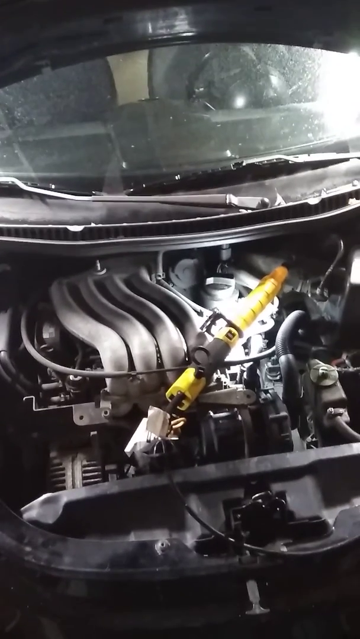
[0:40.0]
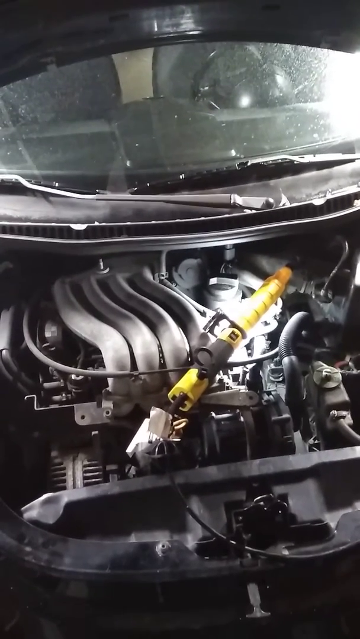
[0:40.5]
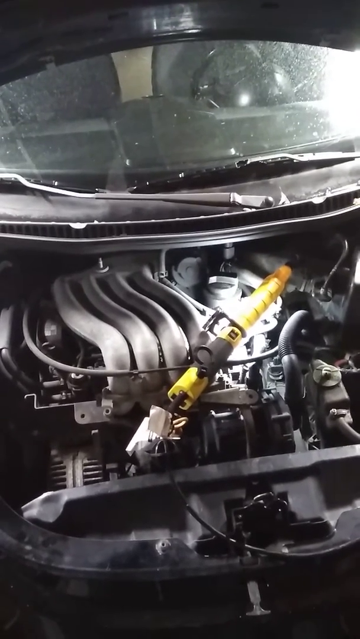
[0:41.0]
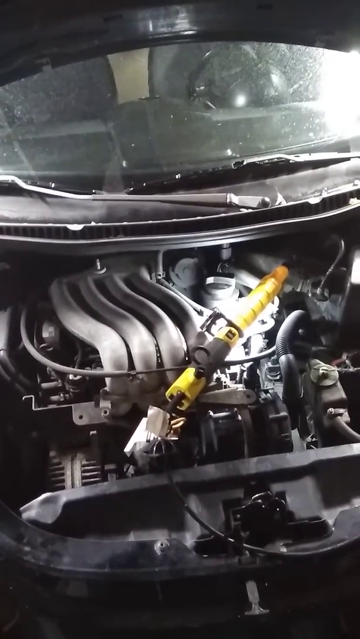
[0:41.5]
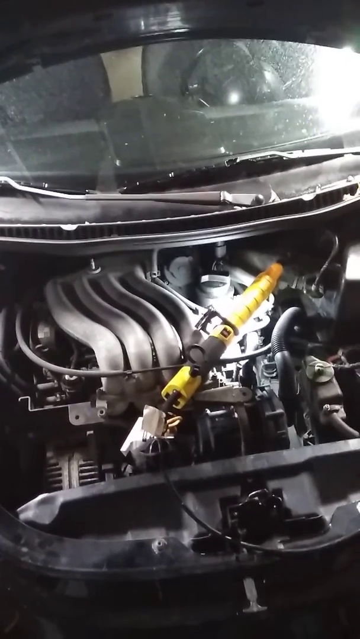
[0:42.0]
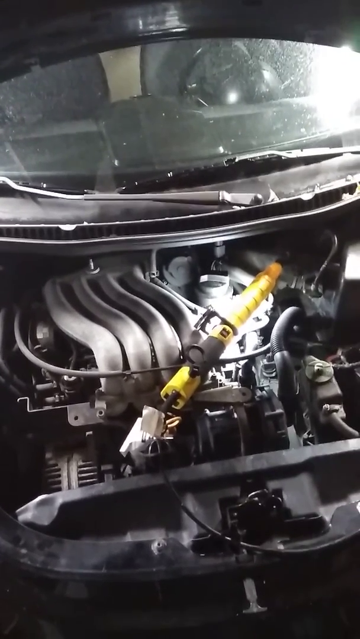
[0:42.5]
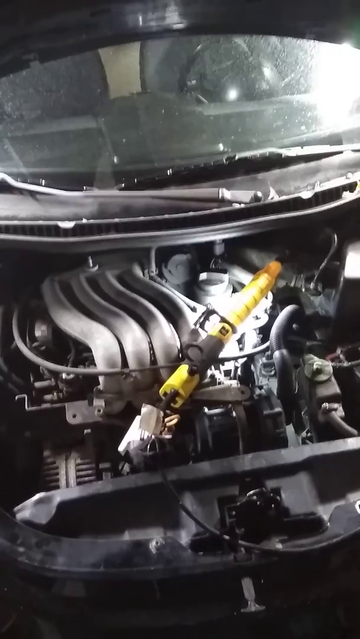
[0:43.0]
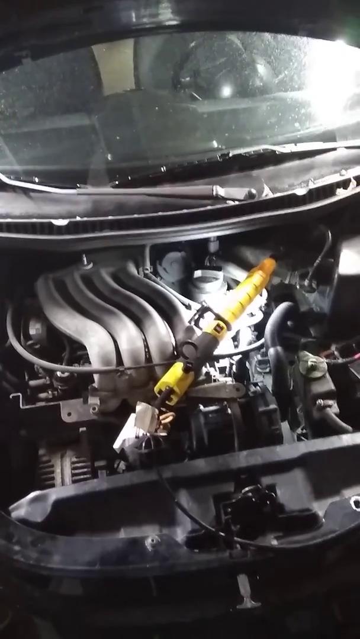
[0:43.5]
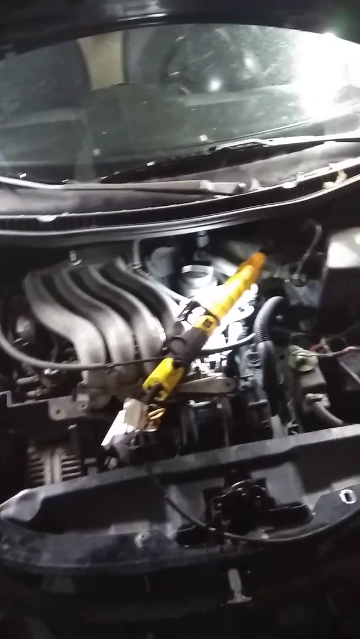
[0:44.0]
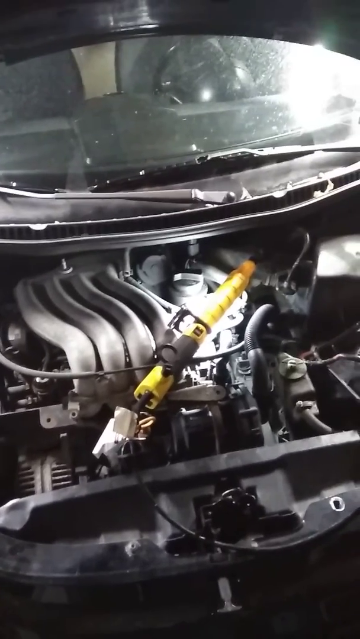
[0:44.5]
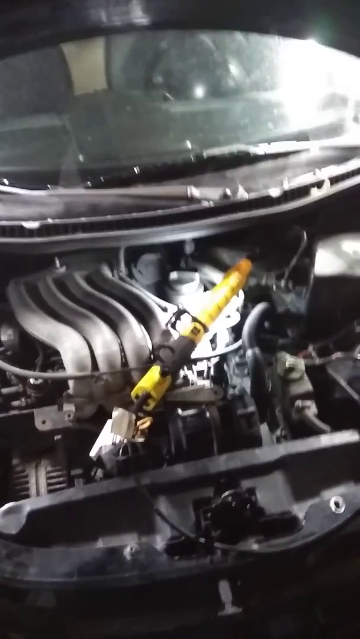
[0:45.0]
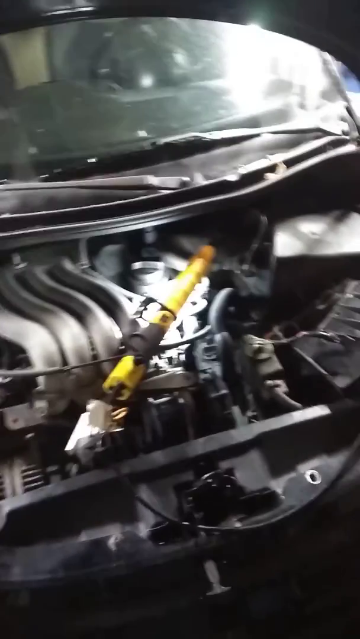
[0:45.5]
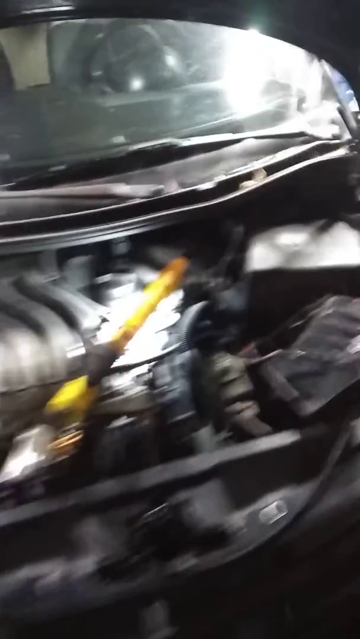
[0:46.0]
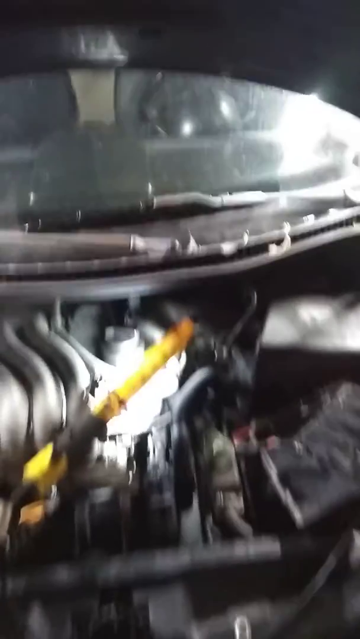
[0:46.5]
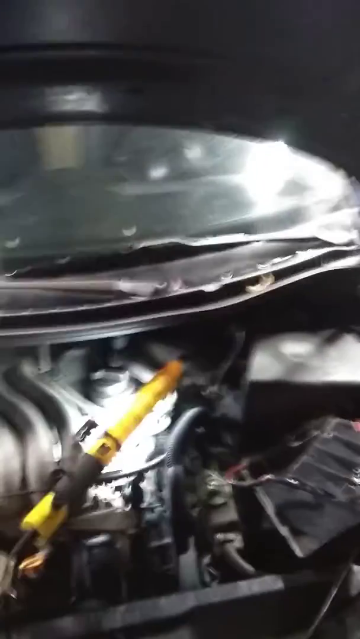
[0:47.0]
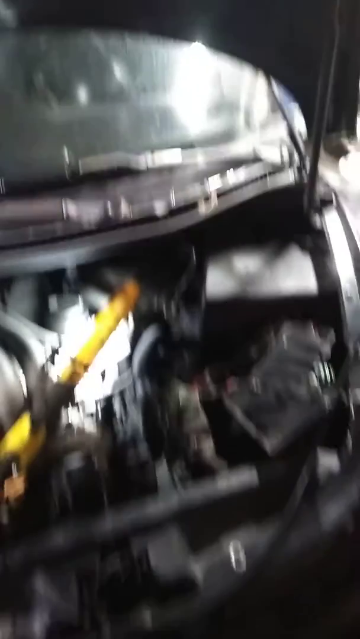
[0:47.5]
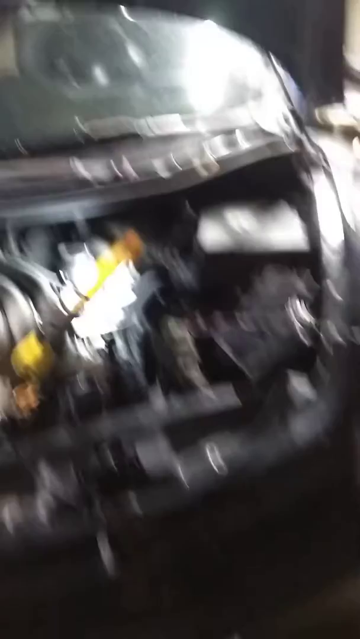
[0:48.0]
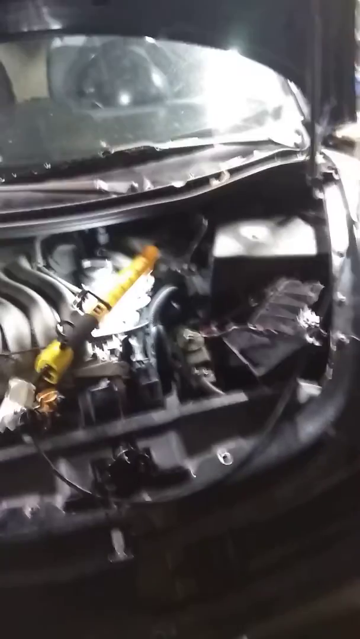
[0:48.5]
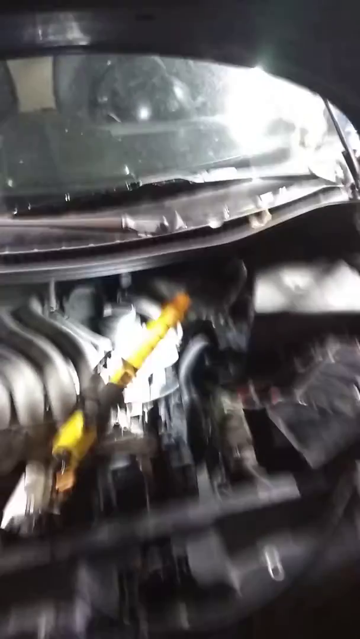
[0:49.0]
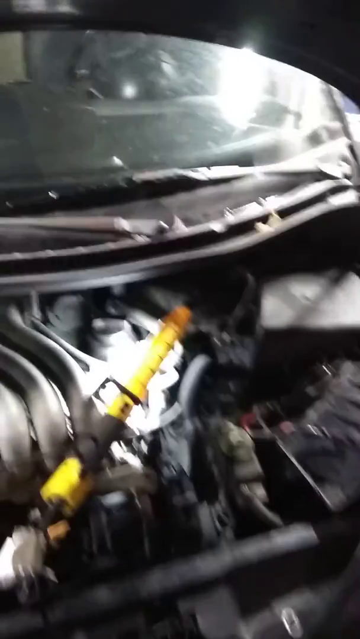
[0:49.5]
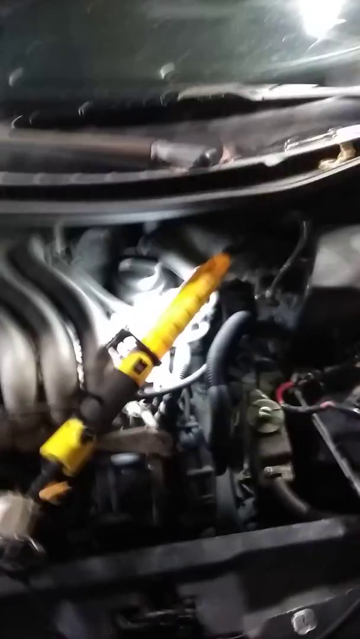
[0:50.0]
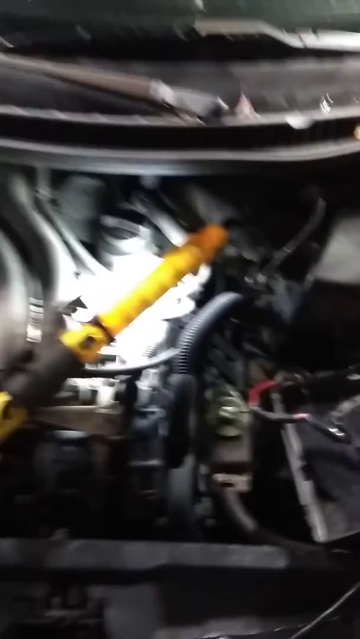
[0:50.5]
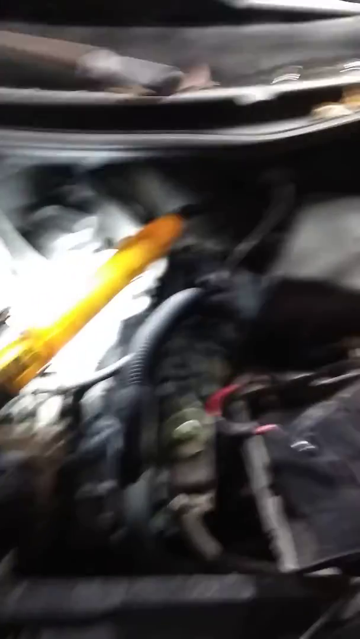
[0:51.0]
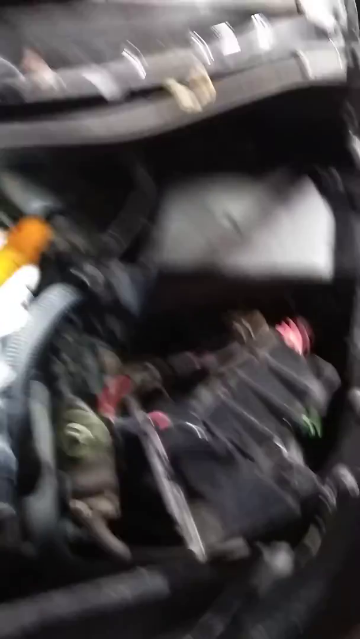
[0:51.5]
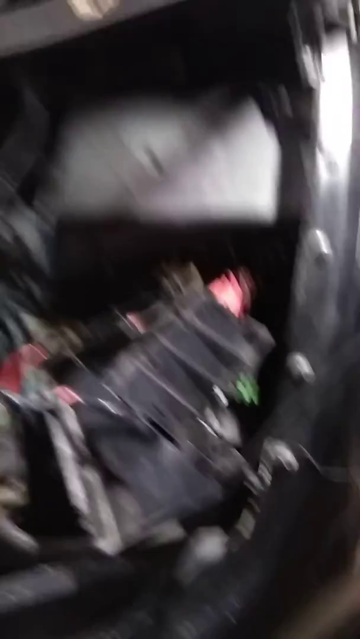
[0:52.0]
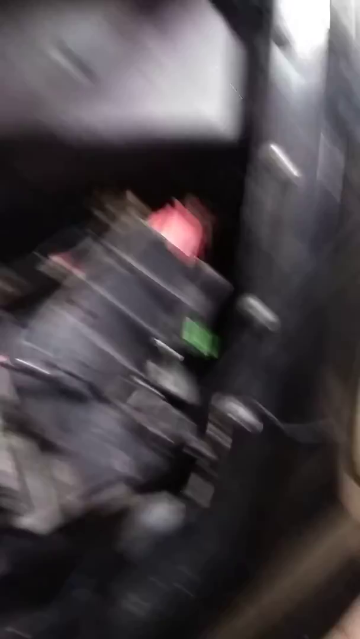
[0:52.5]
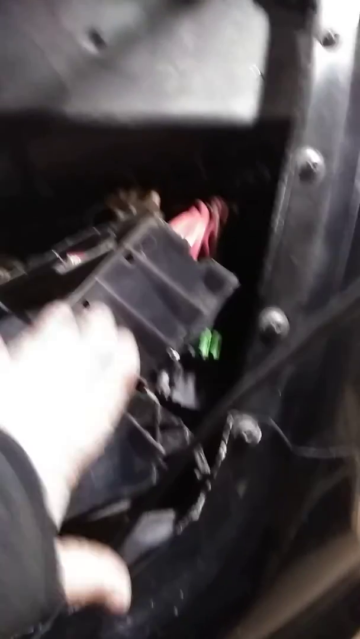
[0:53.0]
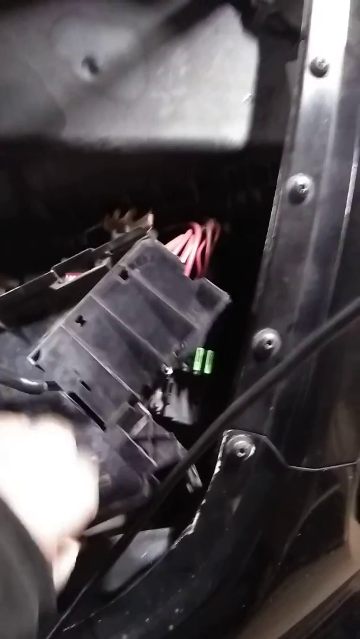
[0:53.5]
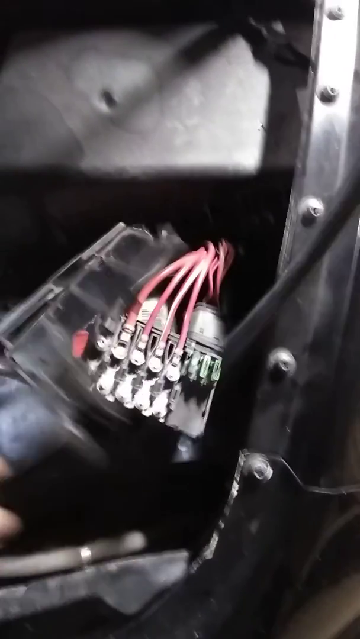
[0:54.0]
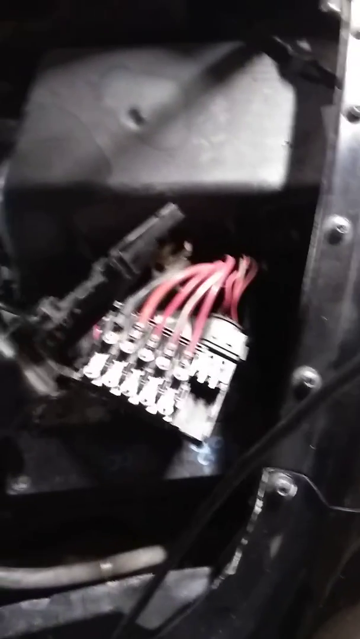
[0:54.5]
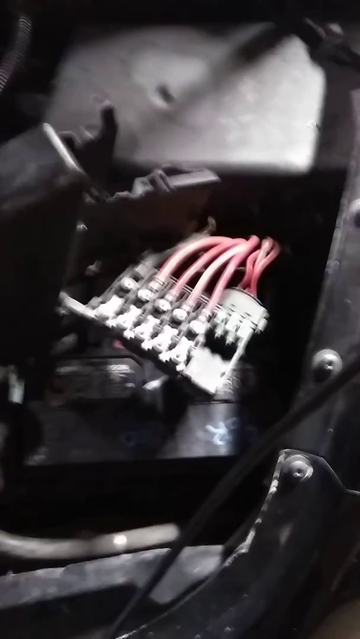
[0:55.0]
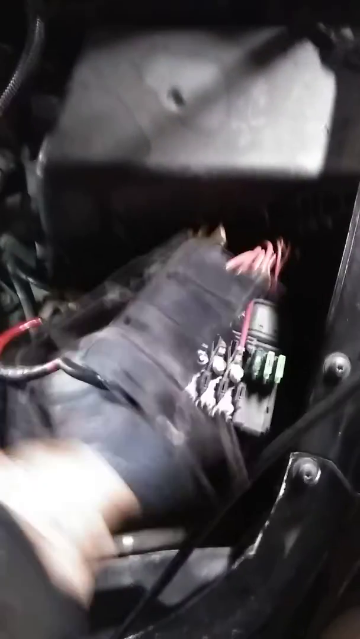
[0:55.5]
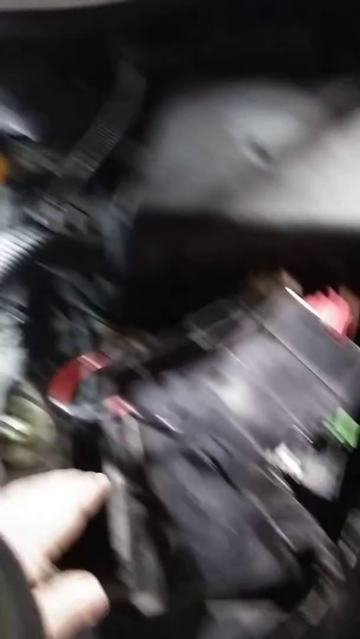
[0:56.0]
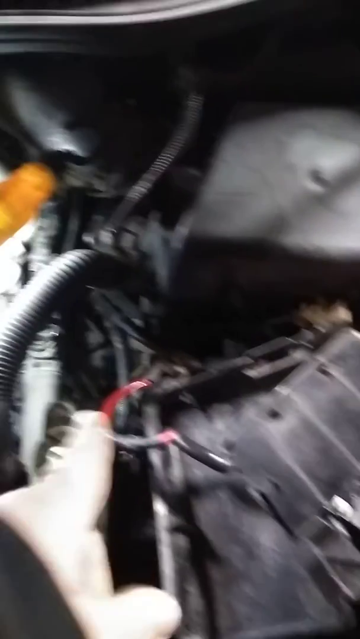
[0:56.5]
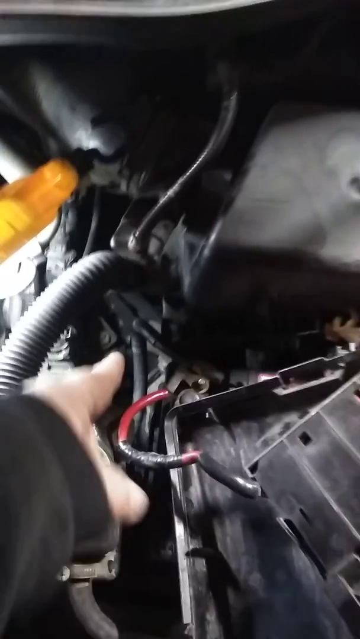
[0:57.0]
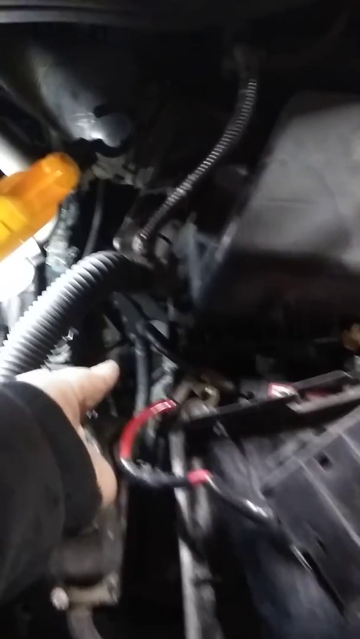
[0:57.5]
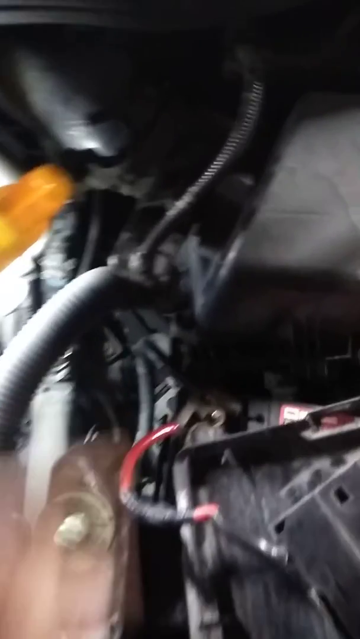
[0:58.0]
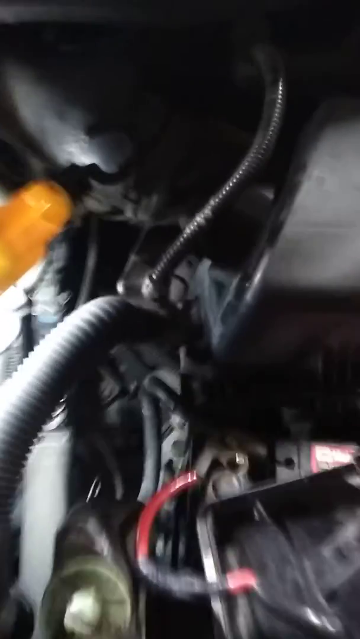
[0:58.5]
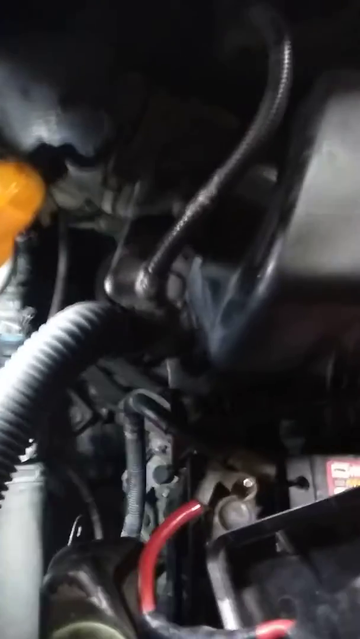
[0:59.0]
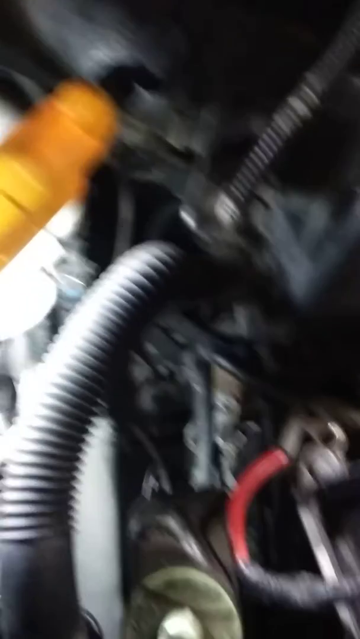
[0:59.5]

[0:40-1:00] The camera remains pretty steady, focusing on an item in the middle of the engine that appears to have been placed on top of it. It is a long yellow thing, almost like a recorder, the musical instrument, in design, about 12 inches long, maybe 13 inches, with a black part on the handle area. A black cable comes out of its base and runs off the screen to the right. The camera holder moves slightly to the right and slowly zooms in a little closer on the engine, then moves toward a pile of plastics, indicating it with their left hand. They pick up some electrical components and loose bits of car pieces: a small black piece of plastic with six red cables coming off it, and another piece. These appear to be disconnected from the rest of the engine and are just sitting there in the engine.